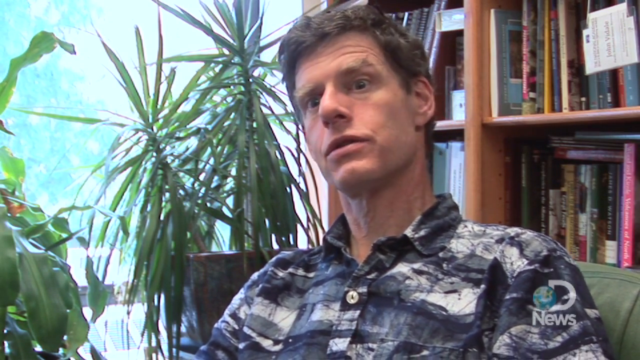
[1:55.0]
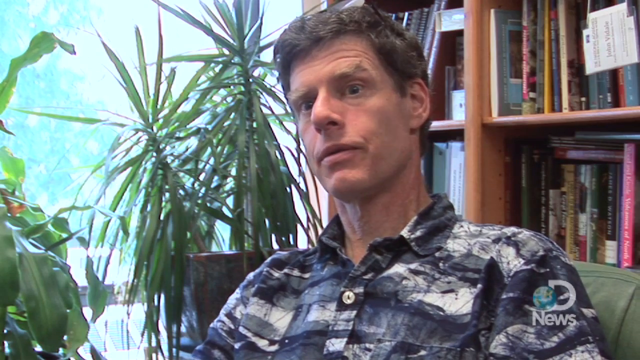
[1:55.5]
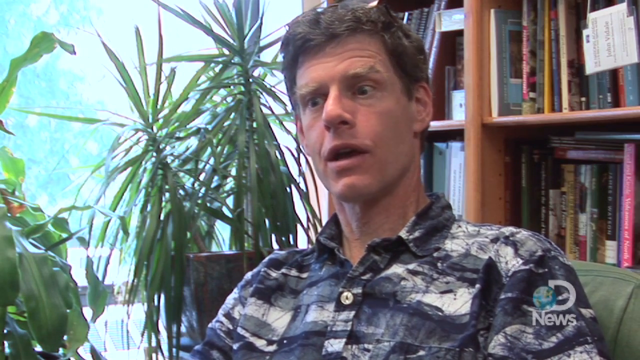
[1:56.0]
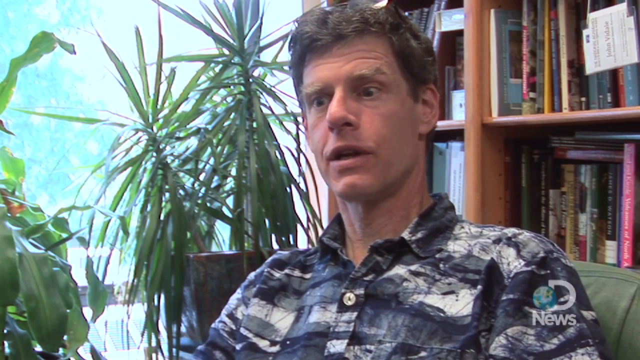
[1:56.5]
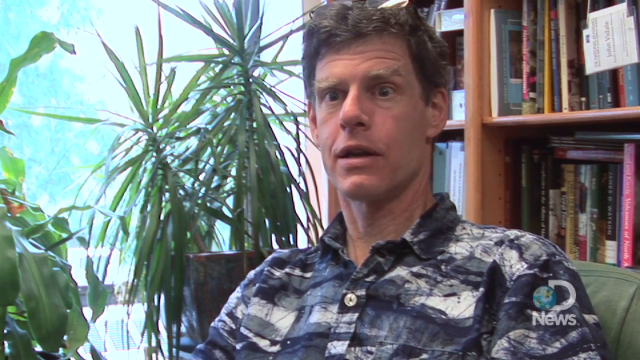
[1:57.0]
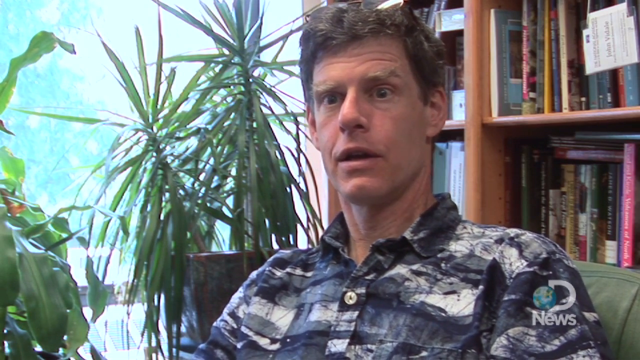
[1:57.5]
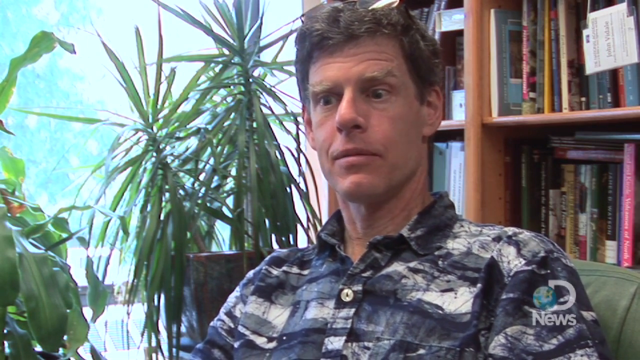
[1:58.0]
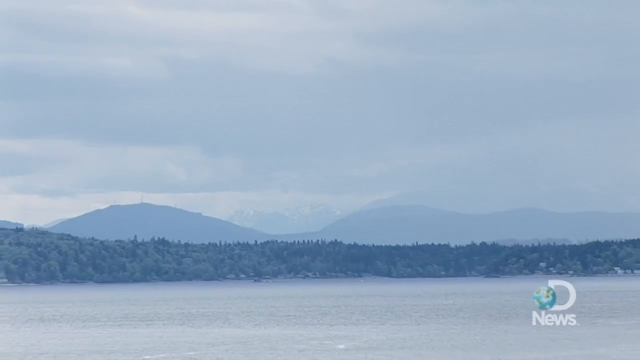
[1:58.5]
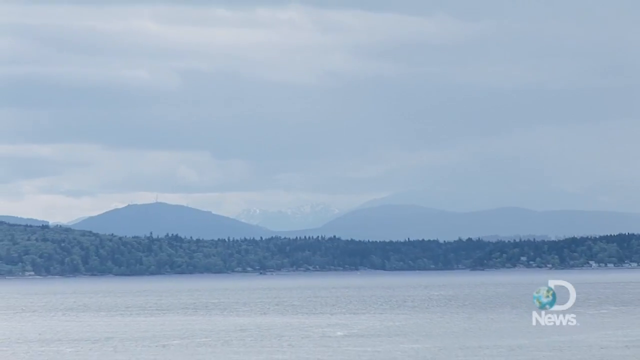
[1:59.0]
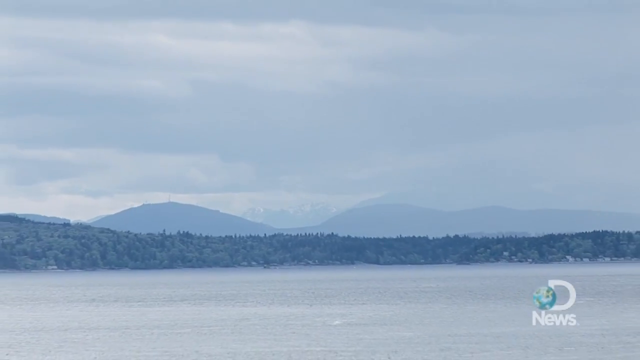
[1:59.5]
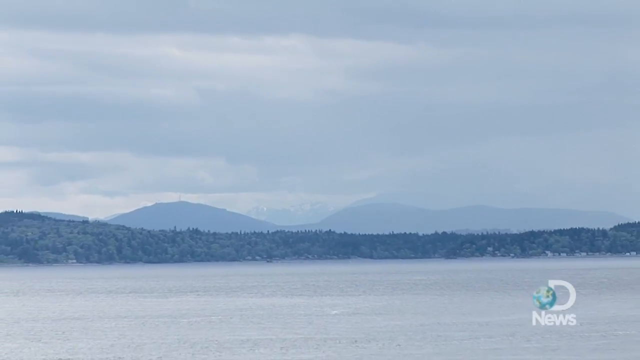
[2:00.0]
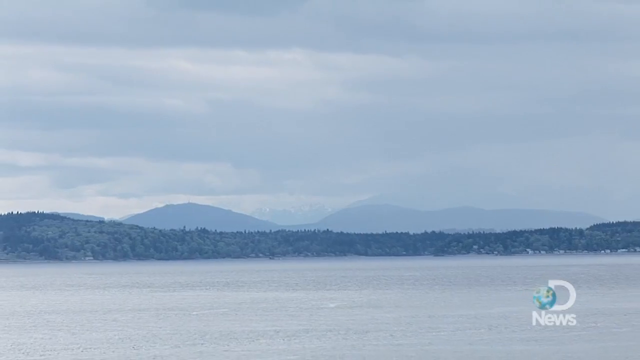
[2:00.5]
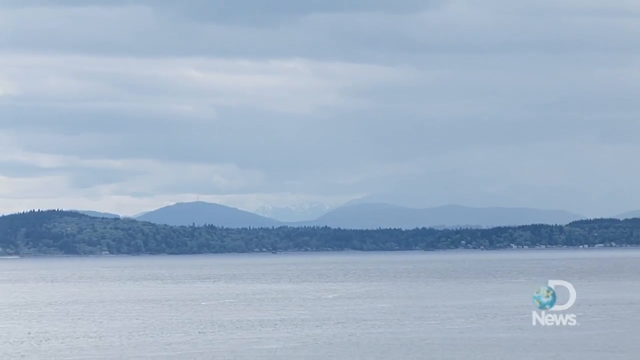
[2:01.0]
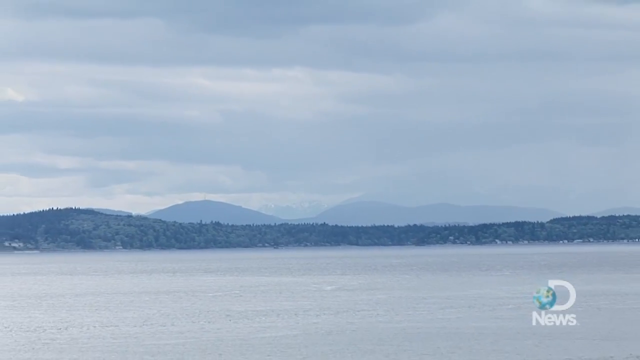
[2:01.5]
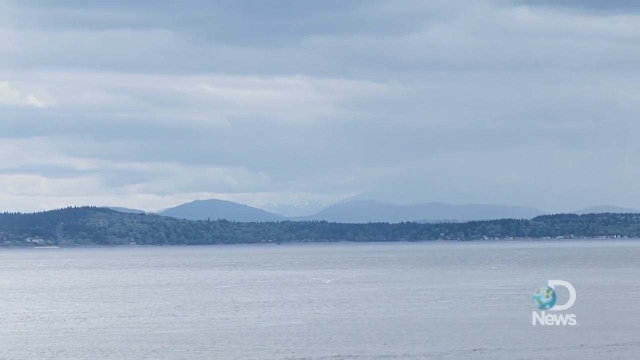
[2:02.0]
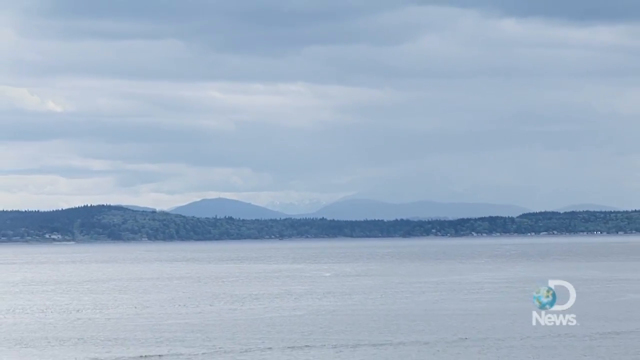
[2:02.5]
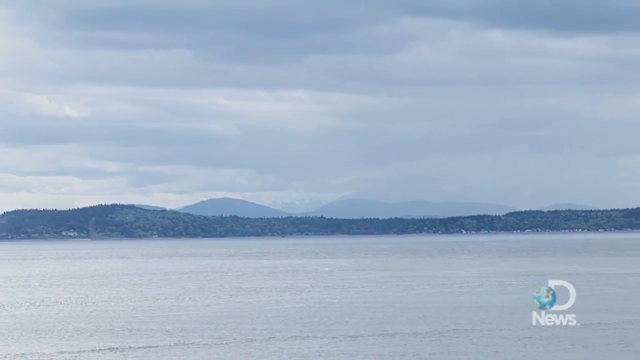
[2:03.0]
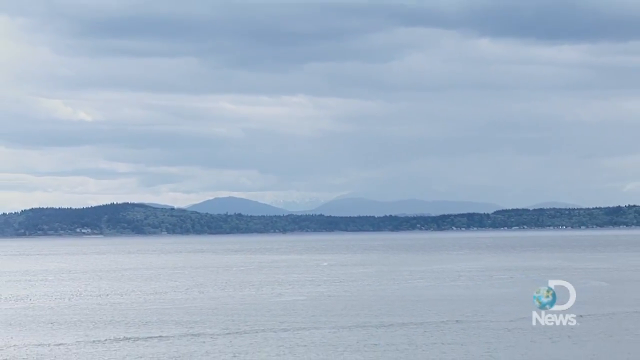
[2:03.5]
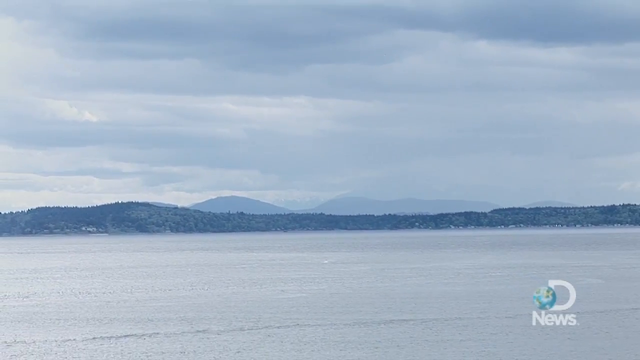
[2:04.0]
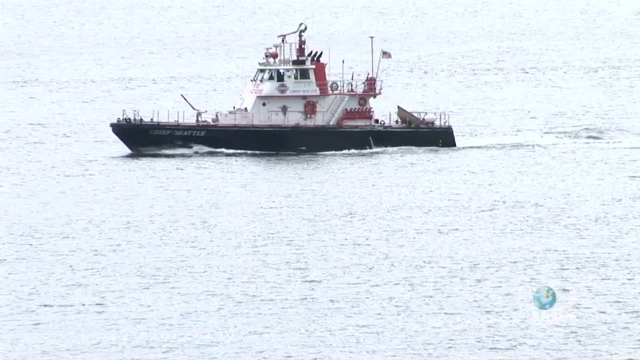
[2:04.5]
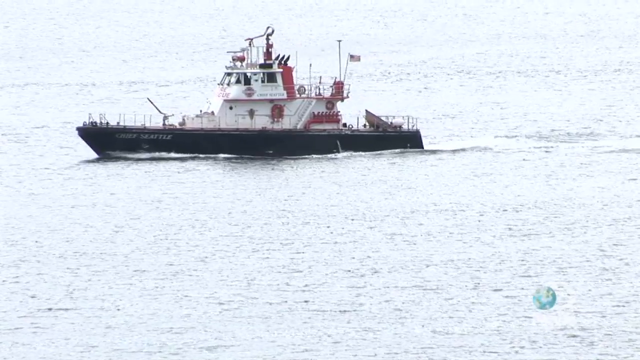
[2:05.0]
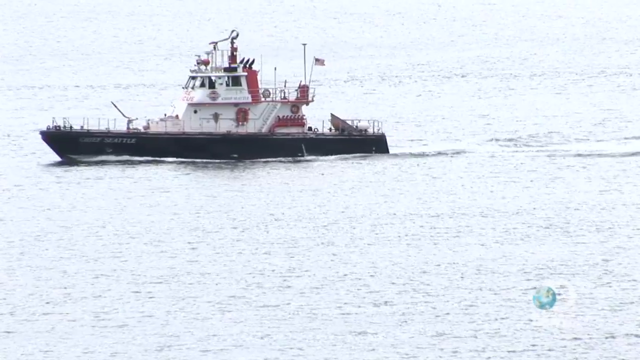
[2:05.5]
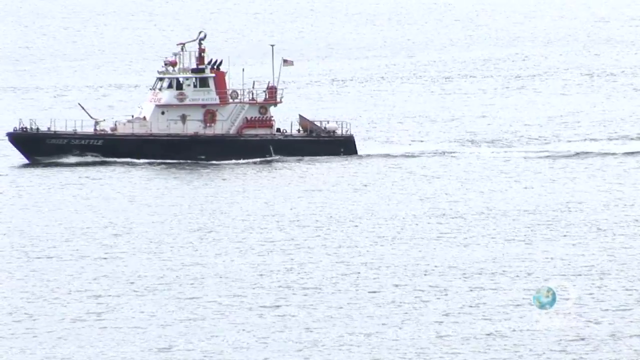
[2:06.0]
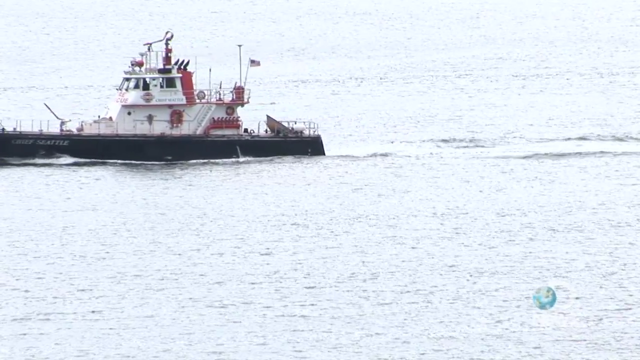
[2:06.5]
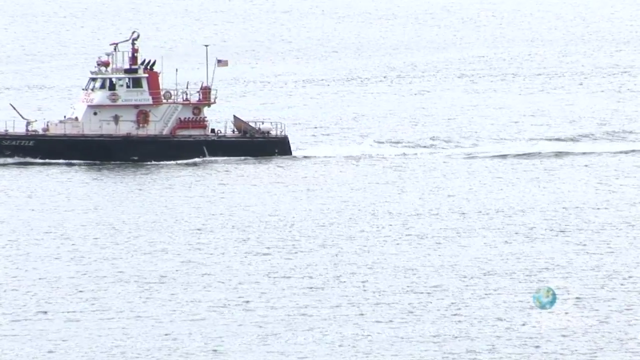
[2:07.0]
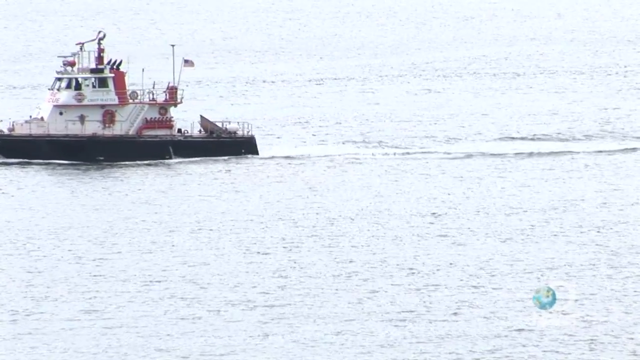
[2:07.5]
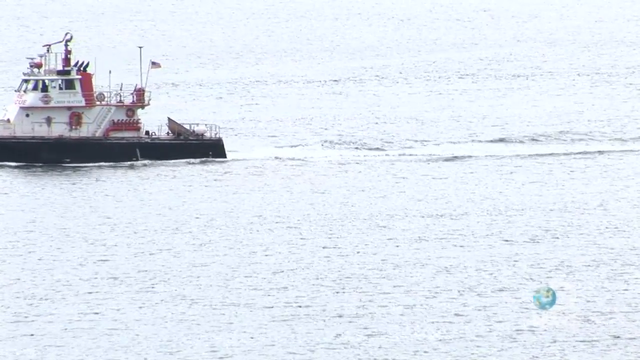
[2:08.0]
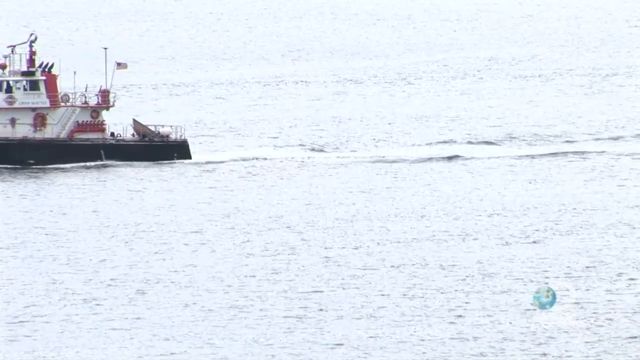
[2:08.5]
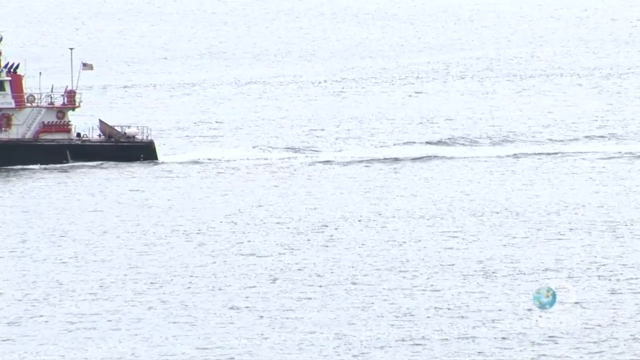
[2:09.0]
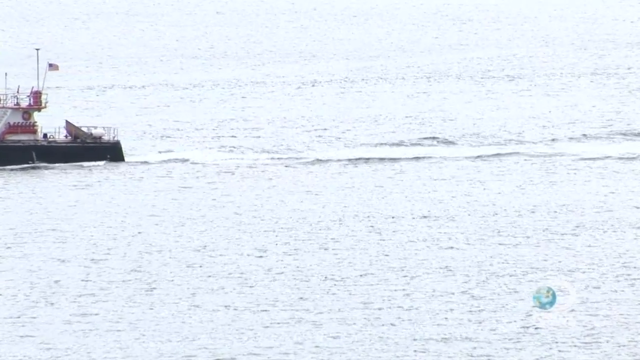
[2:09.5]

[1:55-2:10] Professor Vindale talks again. Then an inlet-type area is shown, with a coast guard boat out in the ocean. There is a backdrop of mountains and a seawall made of rocks protecting the inland areas. The coast guard boat goes through the water with the mountains in the background on a cloudy day with very gray skies. An American flag waves on the back of the coast guard ship. Professor Vindale continues to talk.